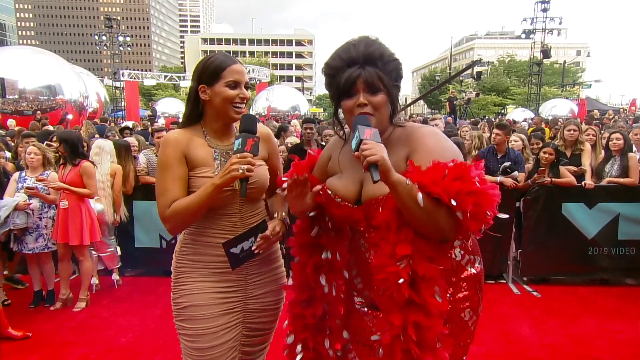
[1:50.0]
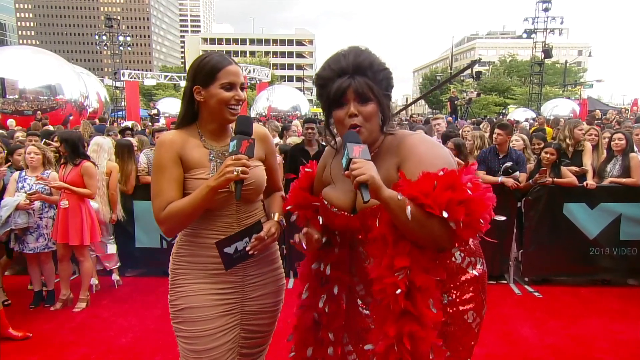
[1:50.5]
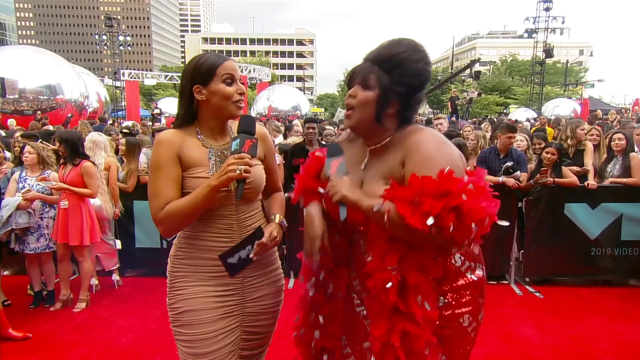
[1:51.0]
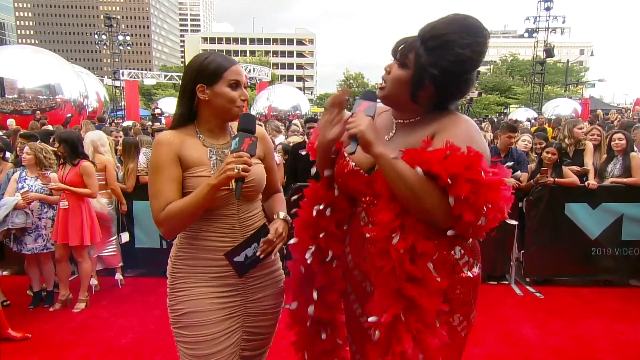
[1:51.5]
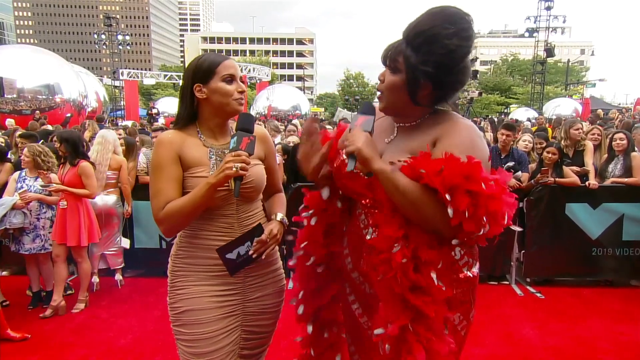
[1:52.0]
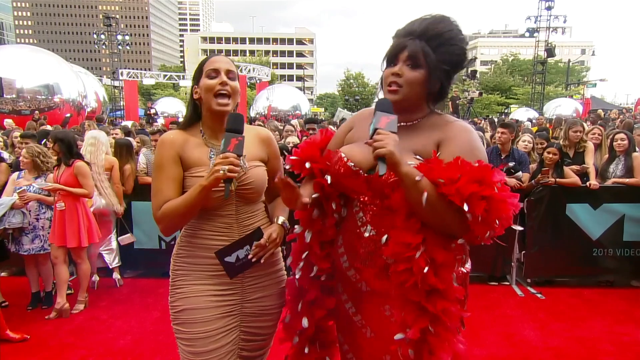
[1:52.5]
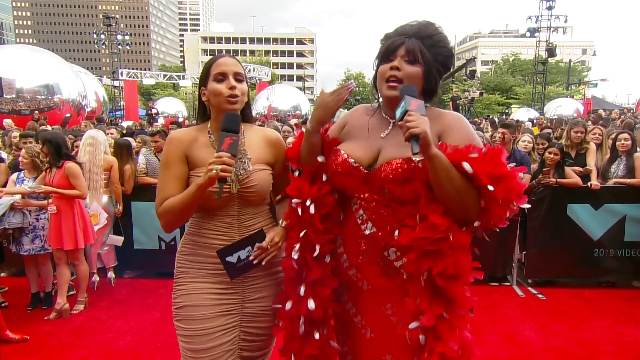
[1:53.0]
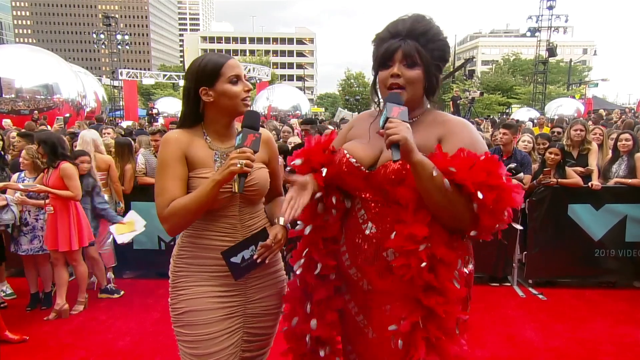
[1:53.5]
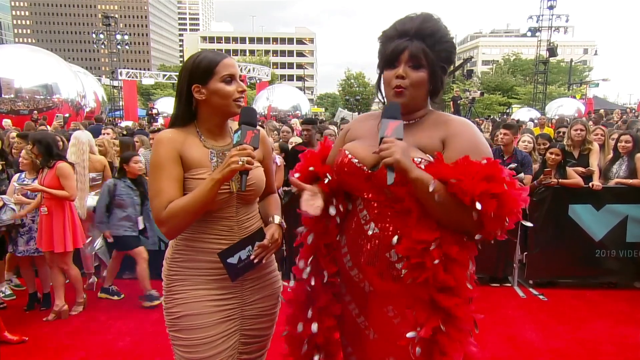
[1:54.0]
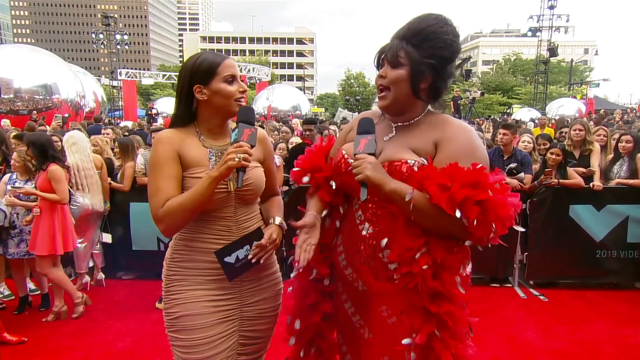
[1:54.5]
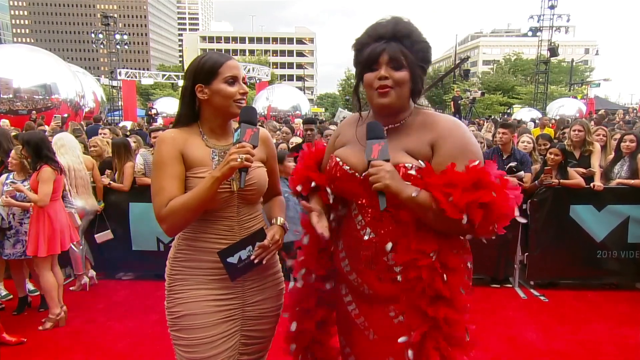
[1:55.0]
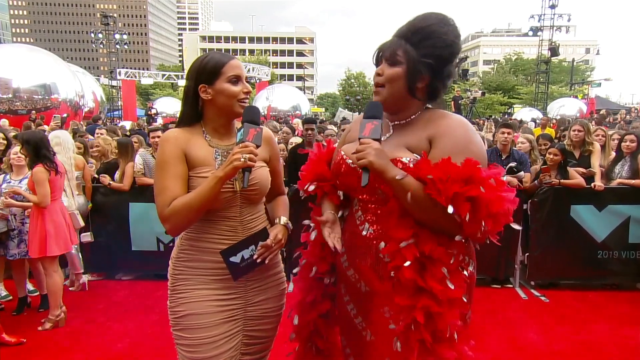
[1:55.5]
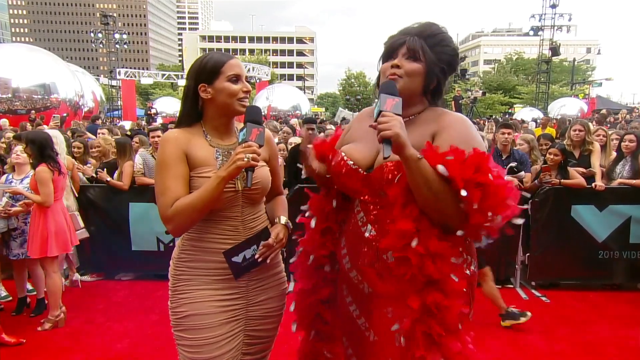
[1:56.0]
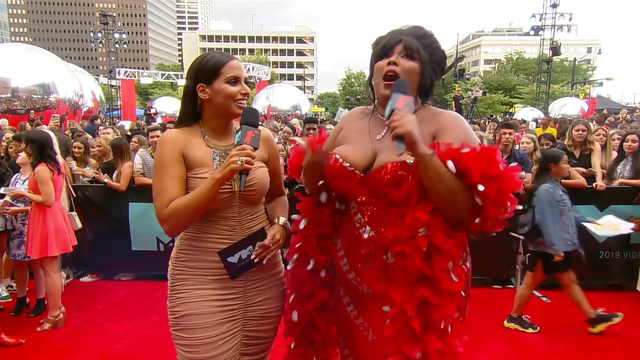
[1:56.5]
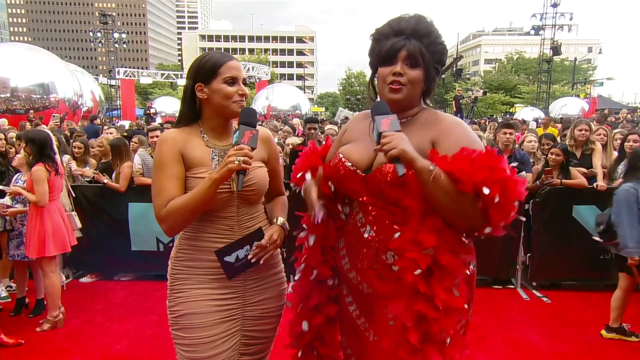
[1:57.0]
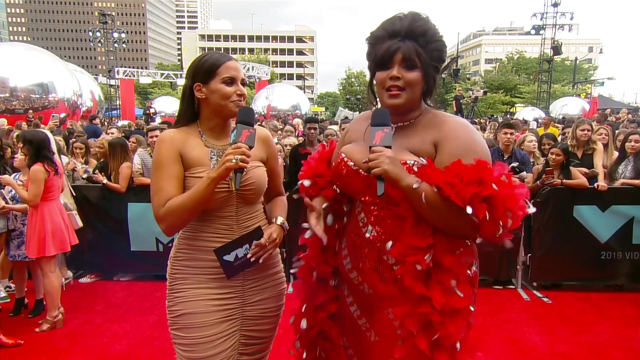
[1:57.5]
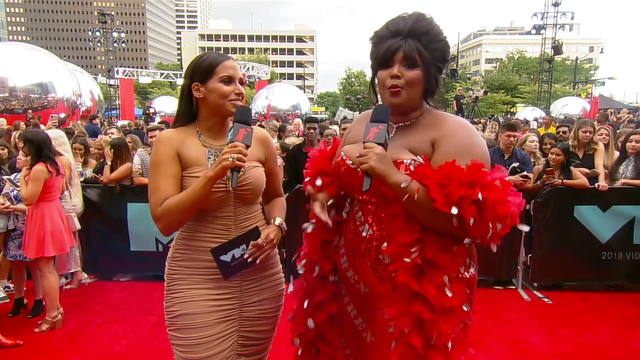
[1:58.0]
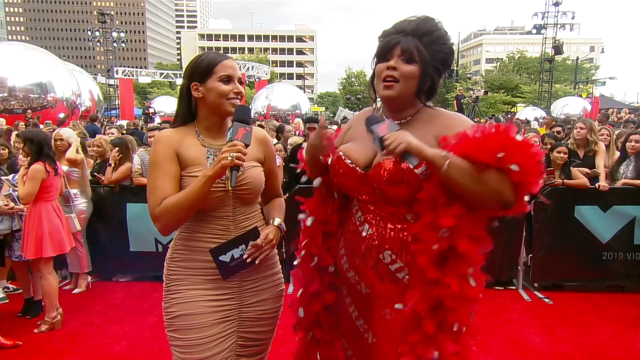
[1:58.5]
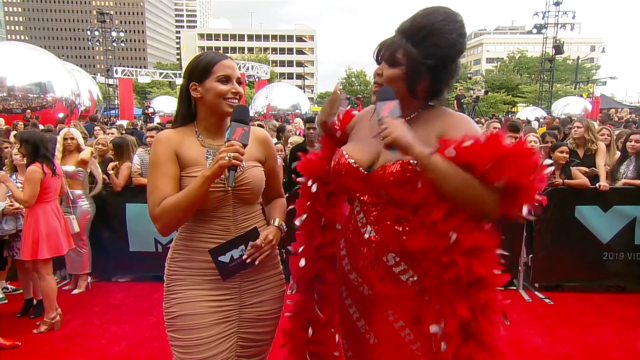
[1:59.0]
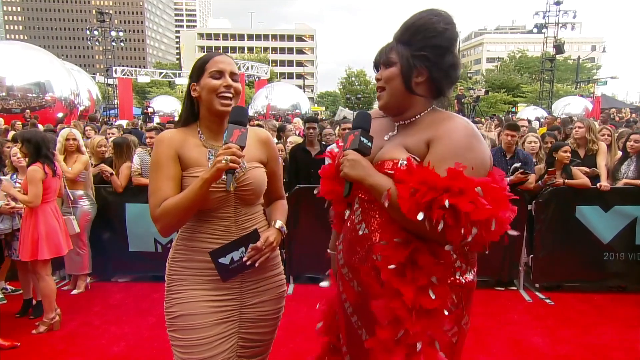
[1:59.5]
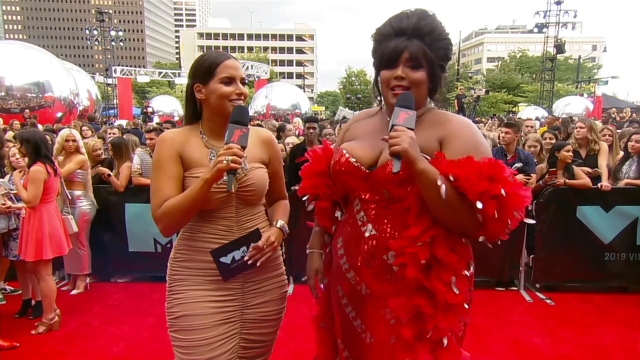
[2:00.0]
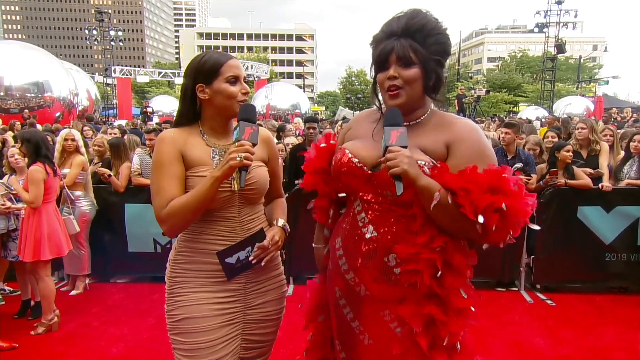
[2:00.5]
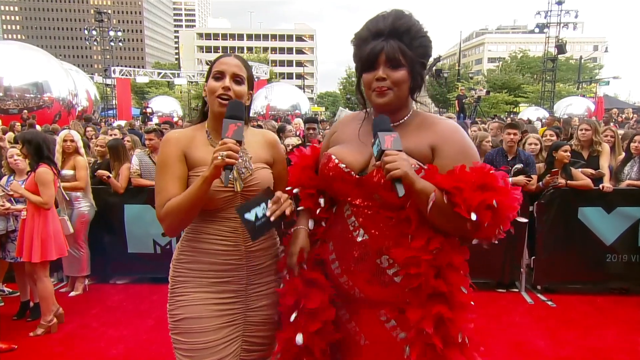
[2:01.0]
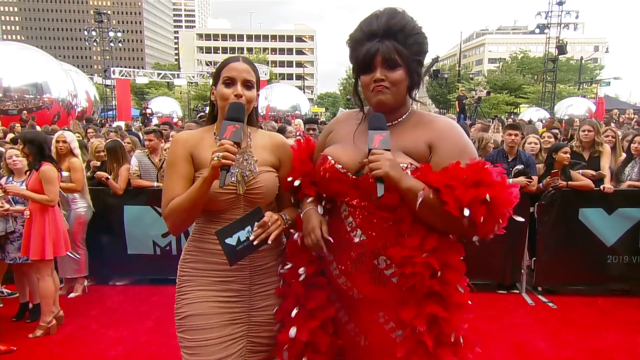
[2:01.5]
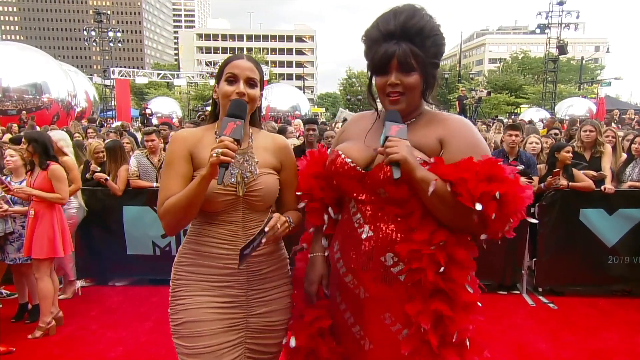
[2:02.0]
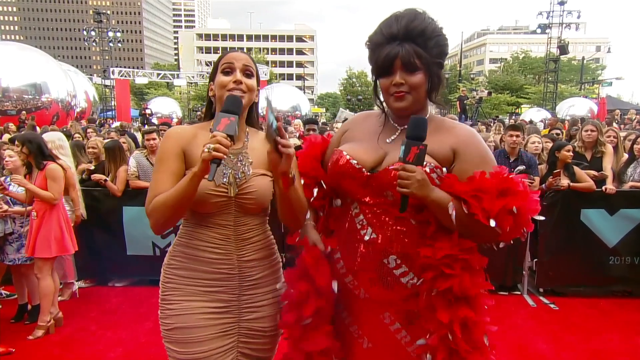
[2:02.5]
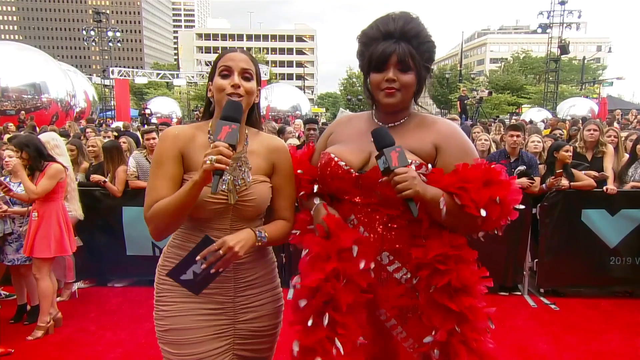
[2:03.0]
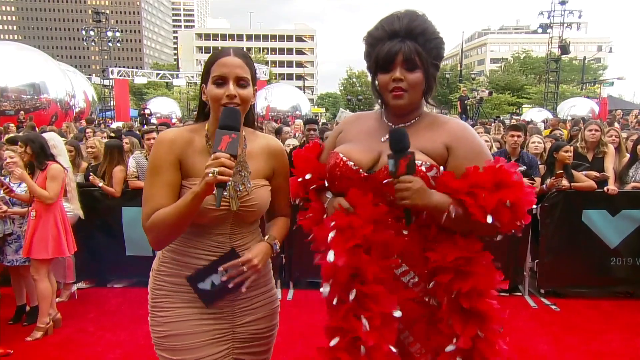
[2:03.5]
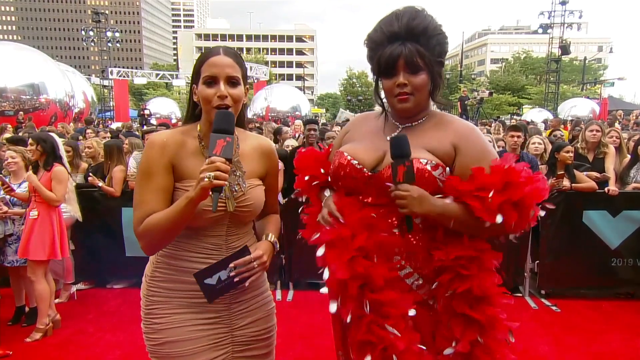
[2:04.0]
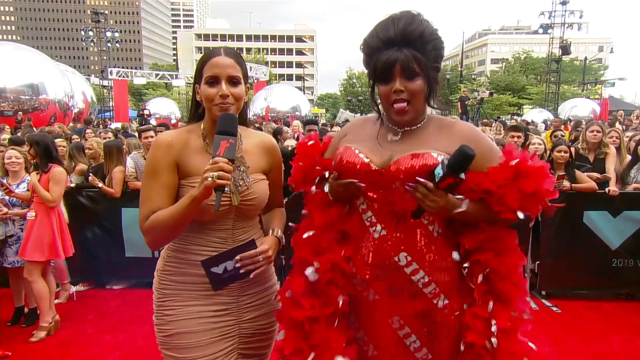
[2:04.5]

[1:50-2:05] Lizzo continues bending down and talking to the camera, then starts laughing, again kind of waving her hand emphatically up and down in front of her and flapping her arms along with what she says. She reaches forward, grabs her chest in her hands and moves it up and down in front of the camera while the interviewer looks on and laughs. Lizzo laughs, then talks to the interviewer, gesturing very emphatically and moving her hand in rhythm with her words. She then grabs her chest again and jiggles it up and down in front of the camera with her hands. Her strapless dress is cut very low.